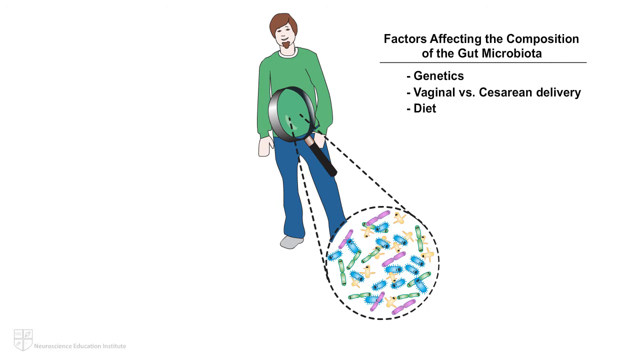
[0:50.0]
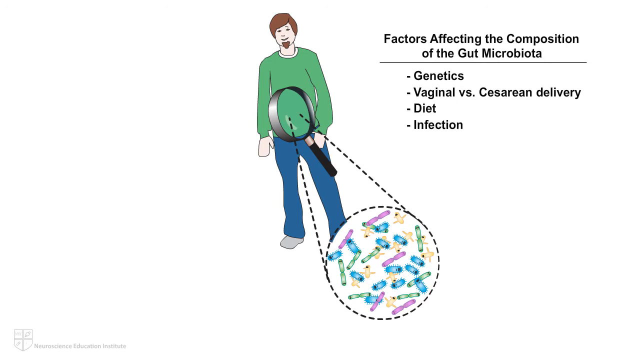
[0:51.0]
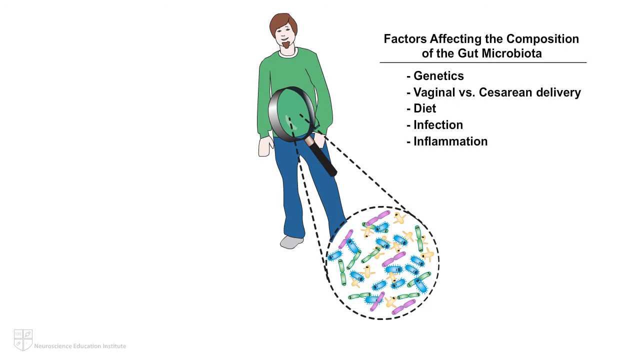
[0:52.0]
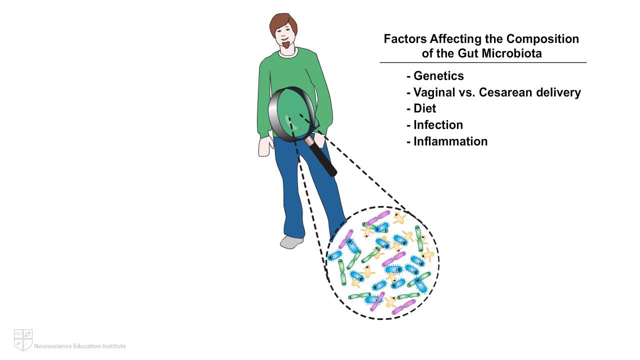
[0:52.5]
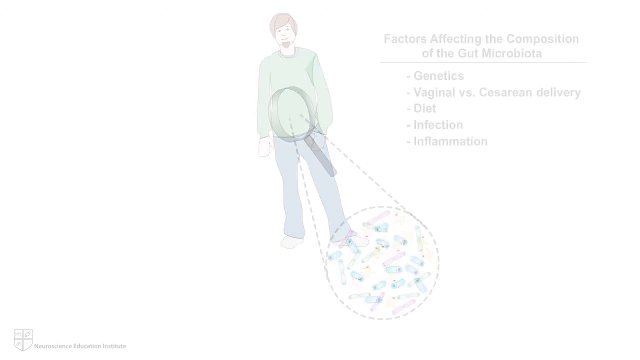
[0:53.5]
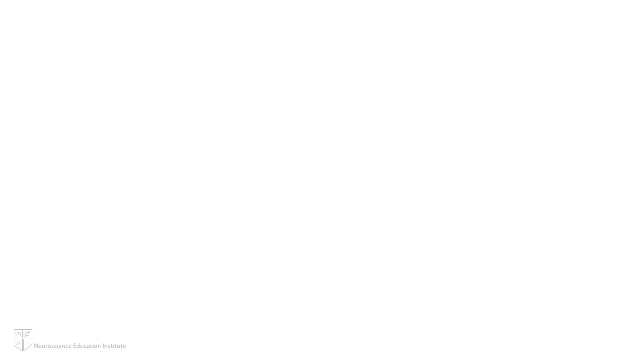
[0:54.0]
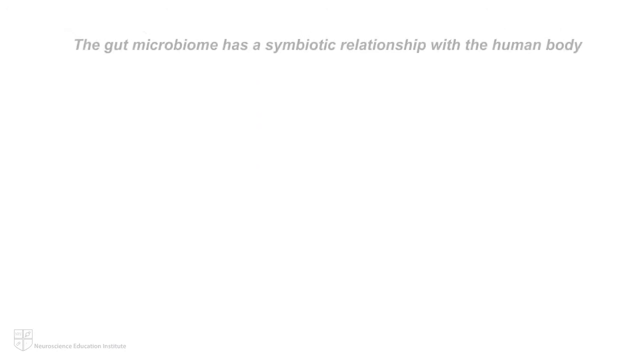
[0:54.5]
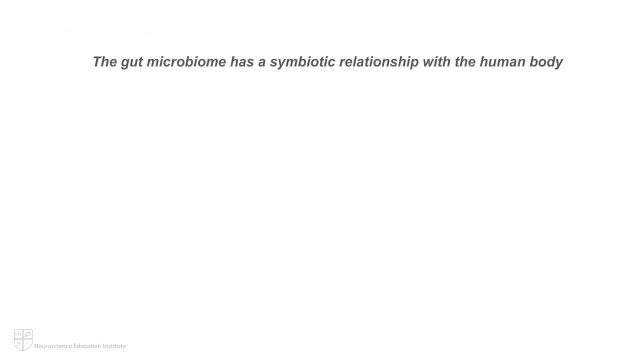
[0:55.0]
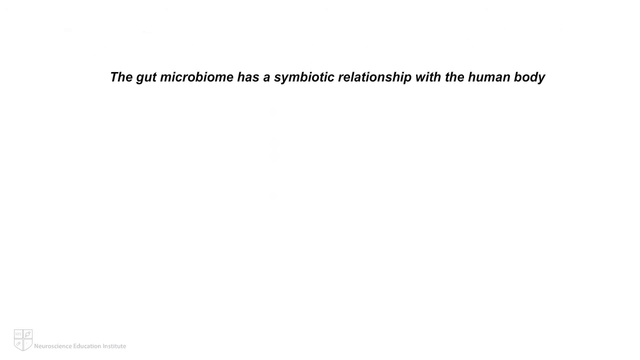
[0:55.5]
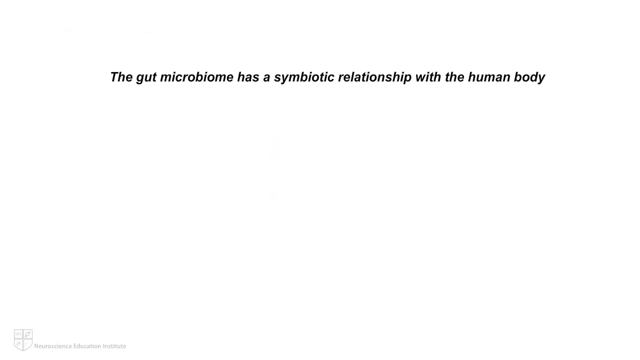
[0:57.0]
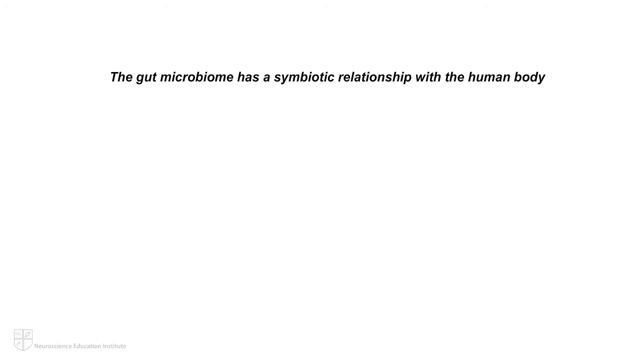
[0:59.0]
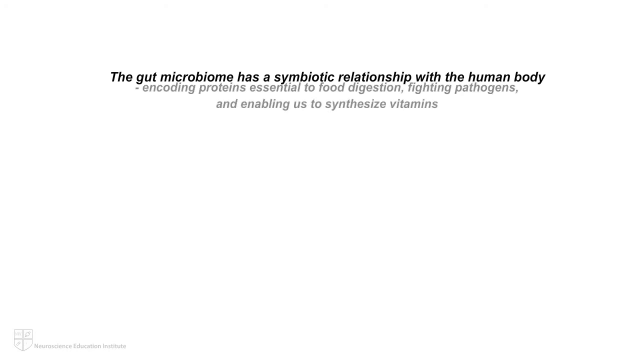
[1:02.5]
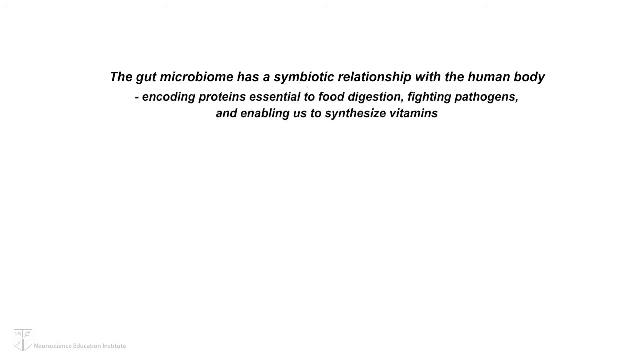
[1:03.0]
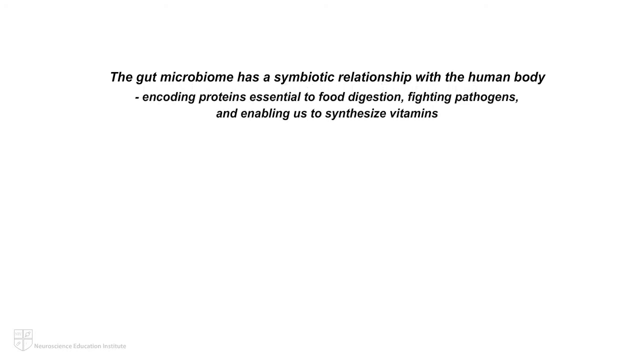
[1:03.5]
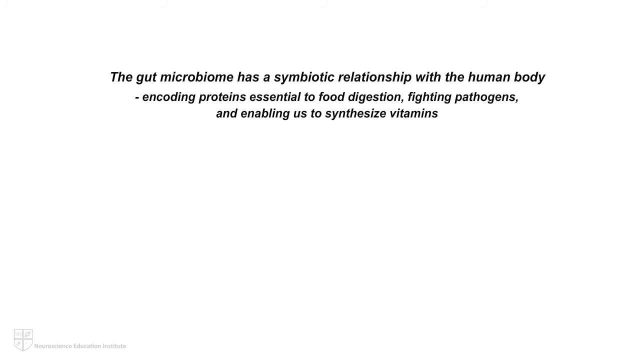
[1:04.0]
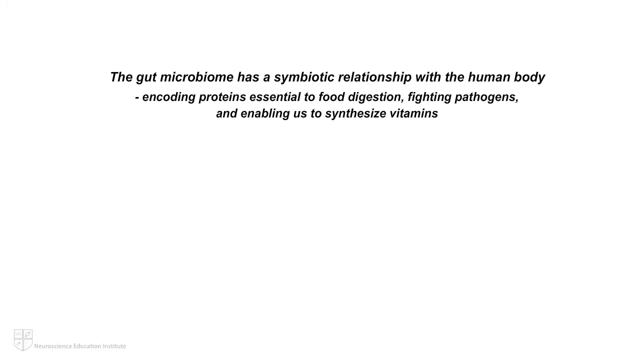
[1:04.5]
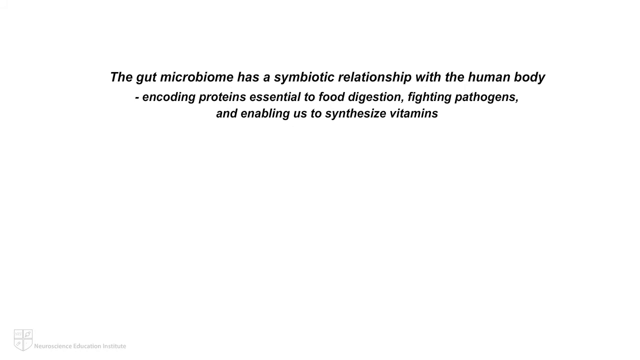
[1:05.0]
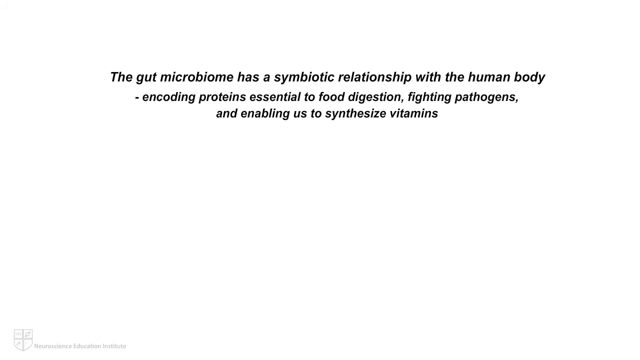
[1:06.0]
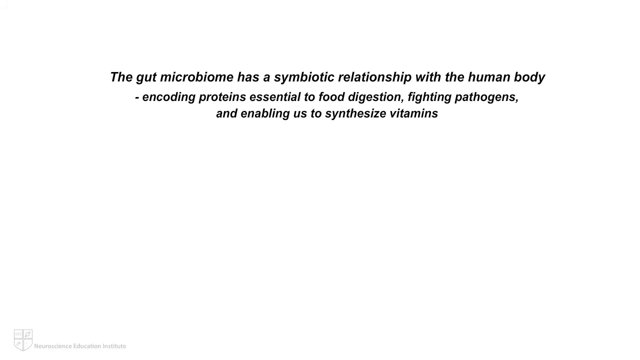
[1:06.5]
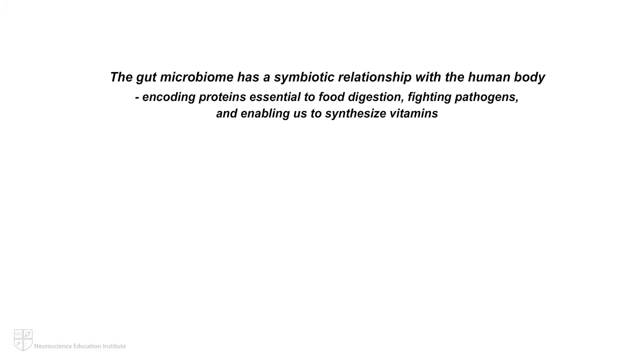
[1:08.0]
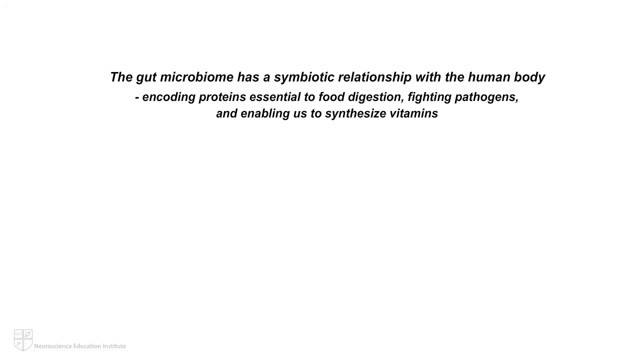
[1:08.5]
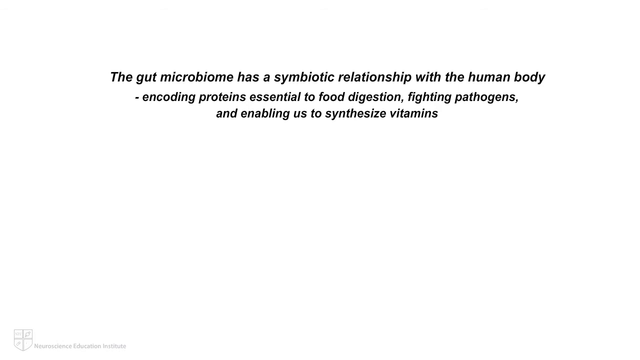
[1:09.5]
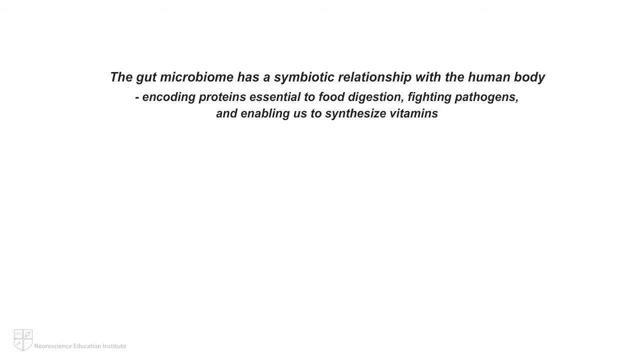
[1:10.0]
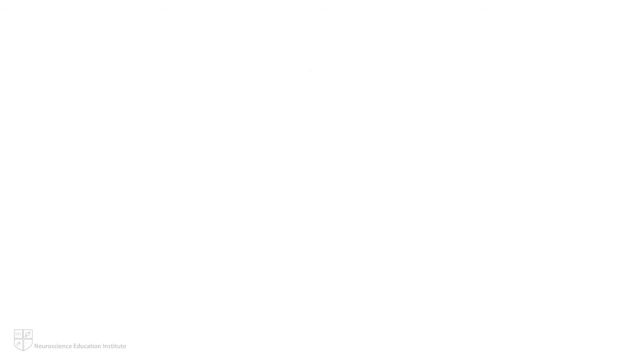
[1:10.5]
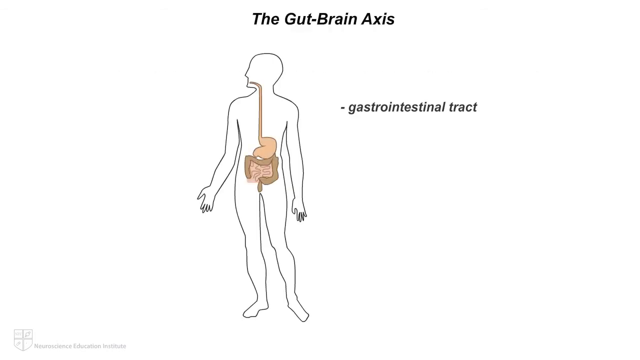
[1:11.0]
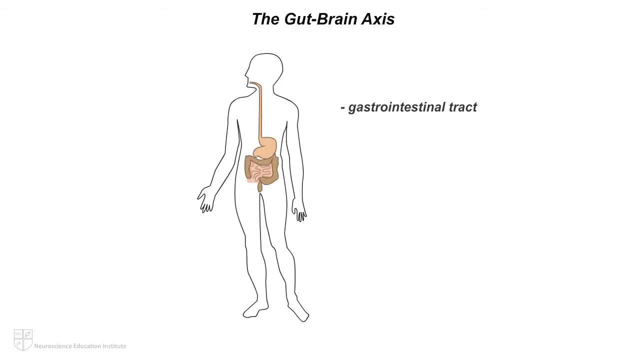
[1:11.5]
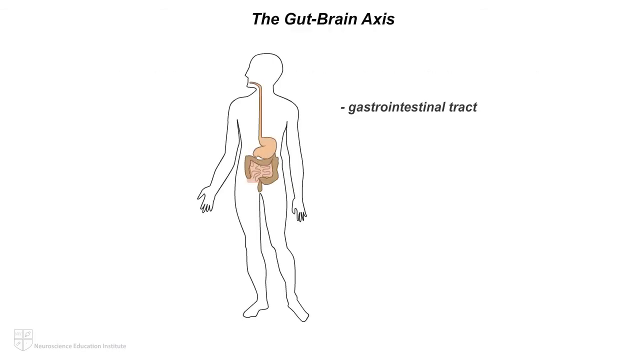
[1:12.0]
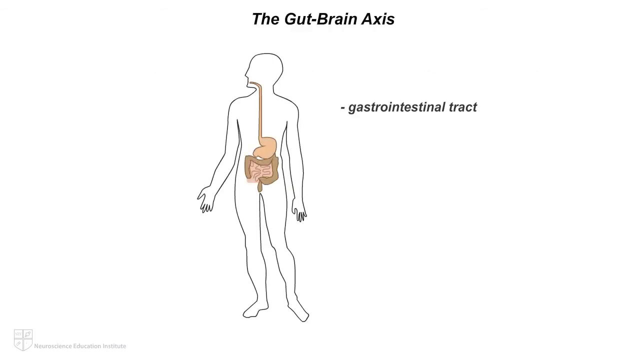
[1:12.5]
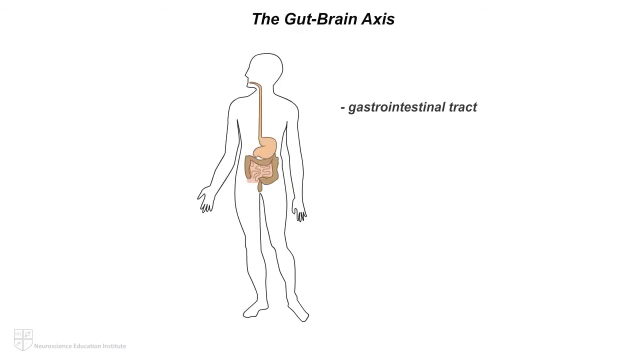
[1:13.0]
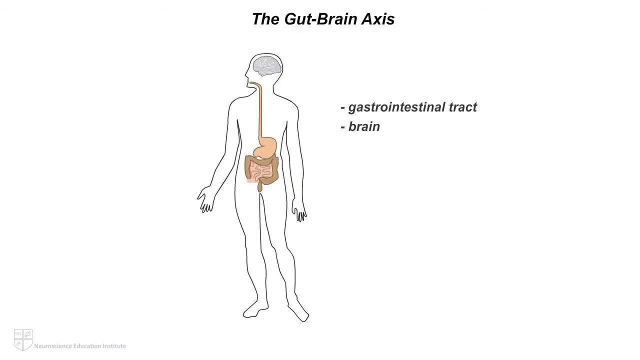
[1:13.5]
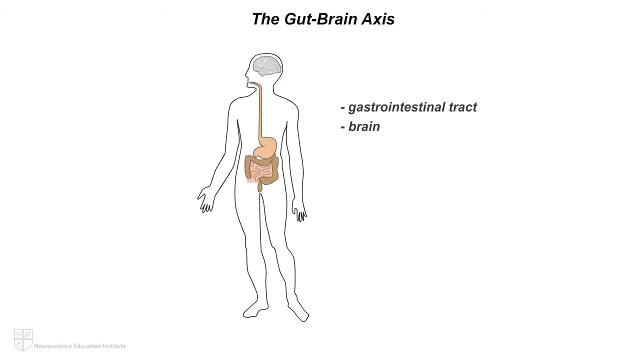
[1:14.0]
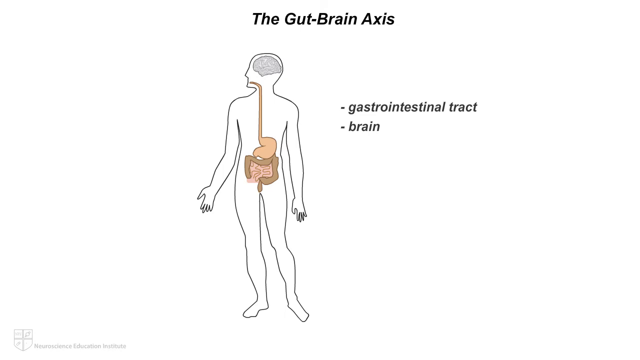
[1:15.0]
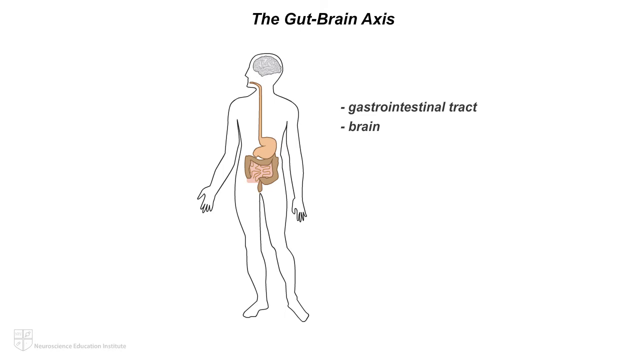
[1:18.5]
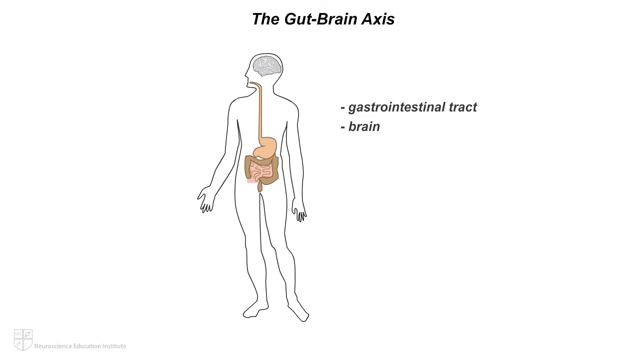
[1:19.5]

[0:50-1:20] A drawing shows a man with brown hair wearing blue jeans and a green shirt, with a magnifying glass placed above his stomach. A dotted black line comes from the magnifying glass, going in two different directions until it forms a white circle with a dotted black border. Inside the circle are multiple cylindrical-looking cartoon bacteria colored purple, blue, green and yellow. Text to the right of the man reads "factors affecting the composition of the gut microbiota. Genetics, vaginal versus caesarean delivery, diet. Infection, inflammation." The slide slowly fades to white. New text appears at the top of the screen reading "the gut microbiome has a symbiotic relationship with the human body. encoding proteins essential to food digestion, fighting pathogens, and enabling us to synthesize vitamins." The text then fades to white.